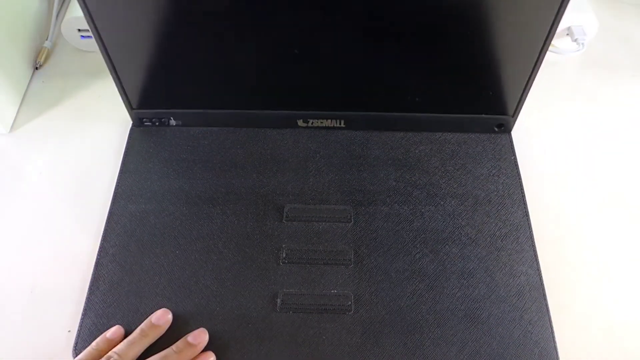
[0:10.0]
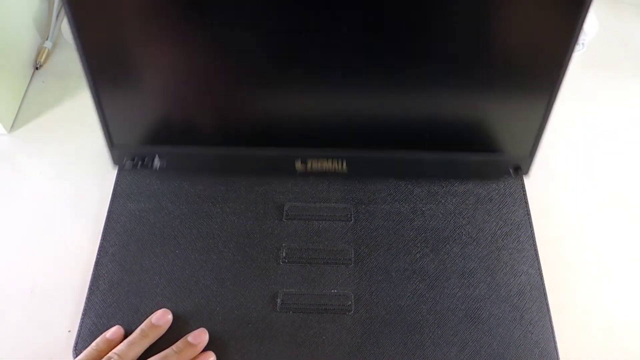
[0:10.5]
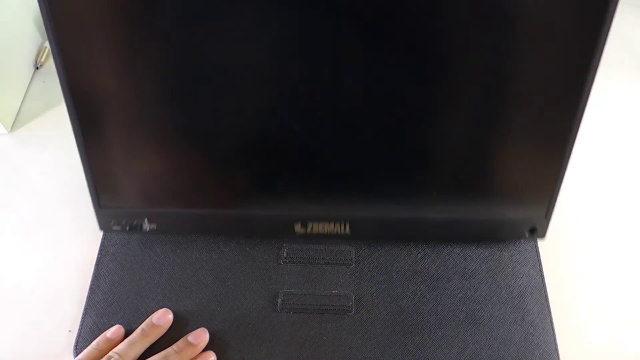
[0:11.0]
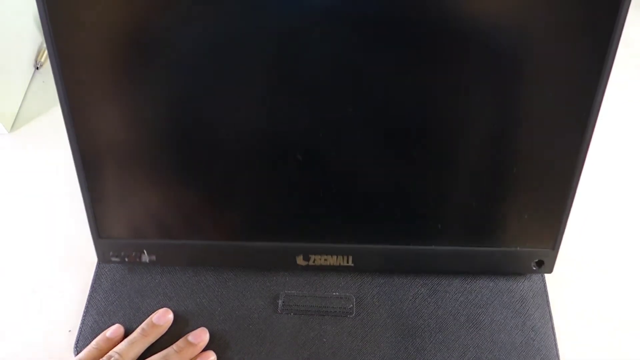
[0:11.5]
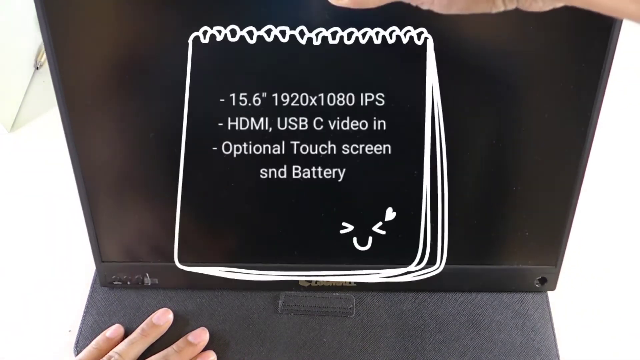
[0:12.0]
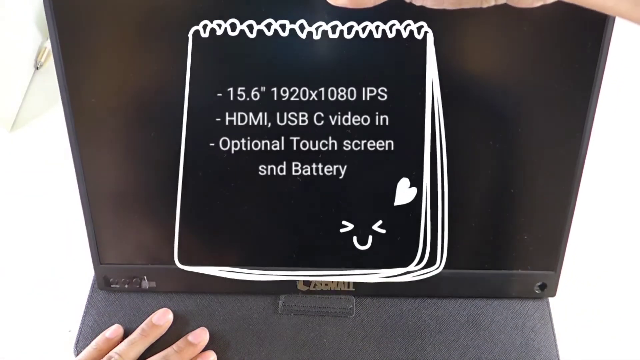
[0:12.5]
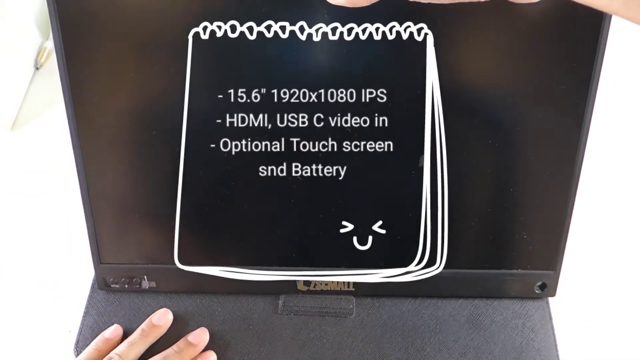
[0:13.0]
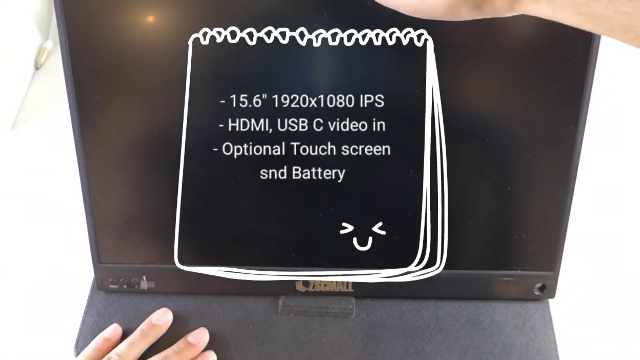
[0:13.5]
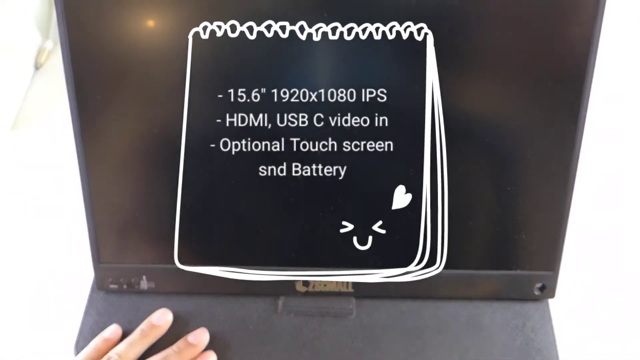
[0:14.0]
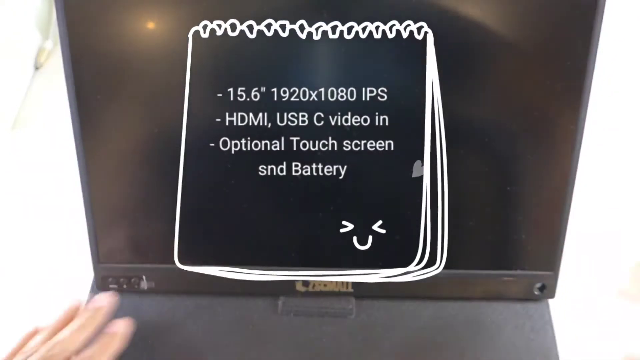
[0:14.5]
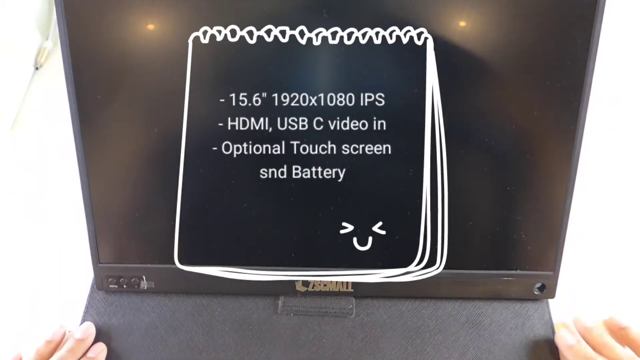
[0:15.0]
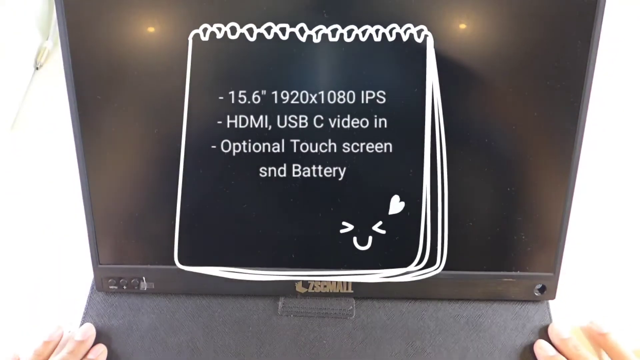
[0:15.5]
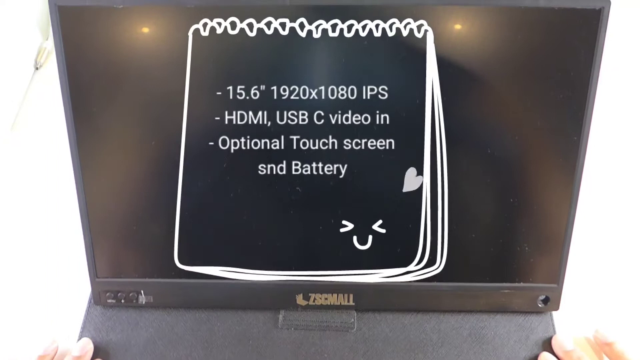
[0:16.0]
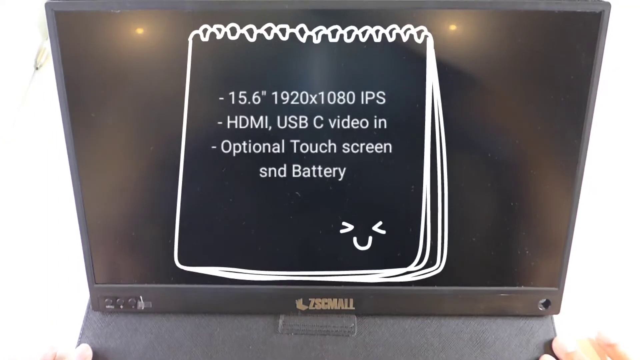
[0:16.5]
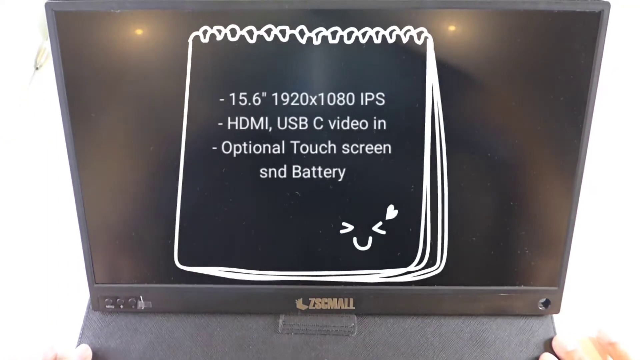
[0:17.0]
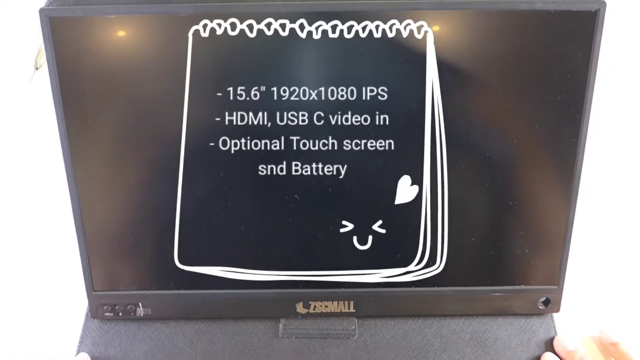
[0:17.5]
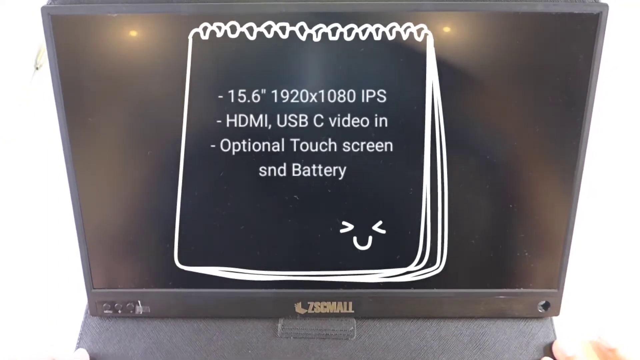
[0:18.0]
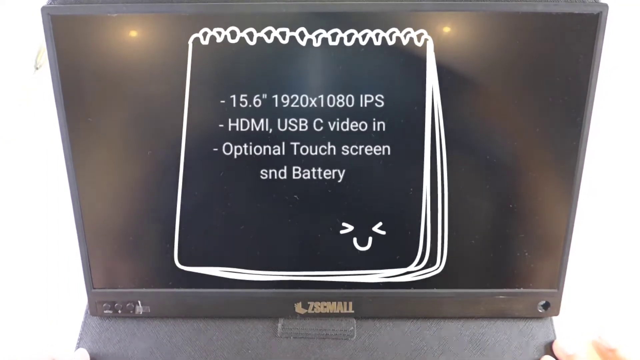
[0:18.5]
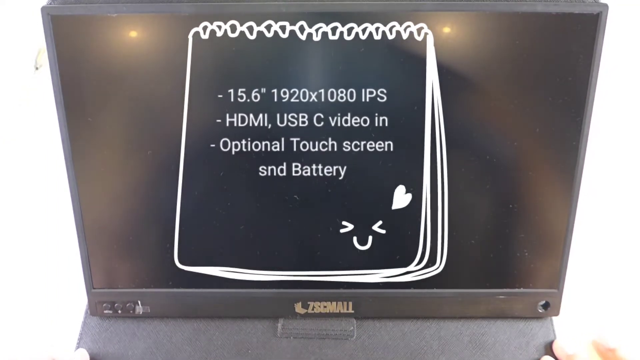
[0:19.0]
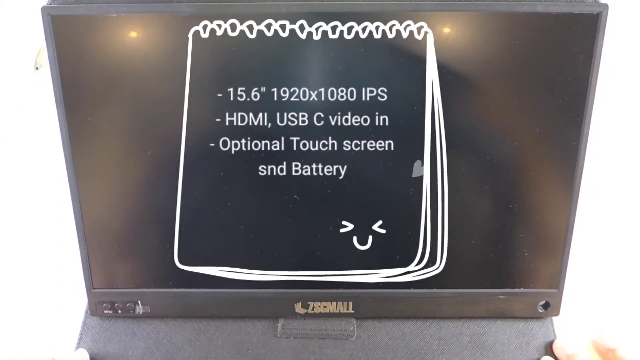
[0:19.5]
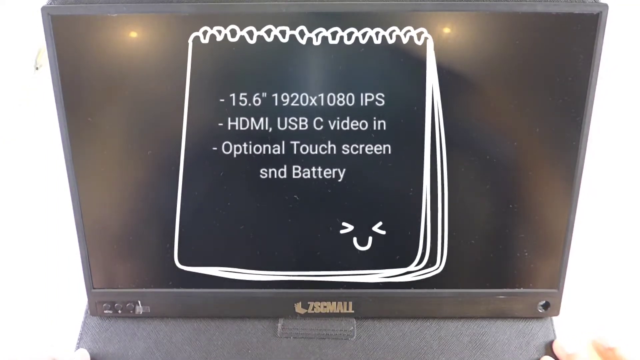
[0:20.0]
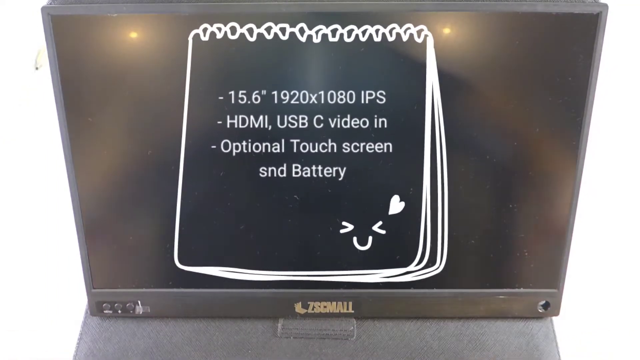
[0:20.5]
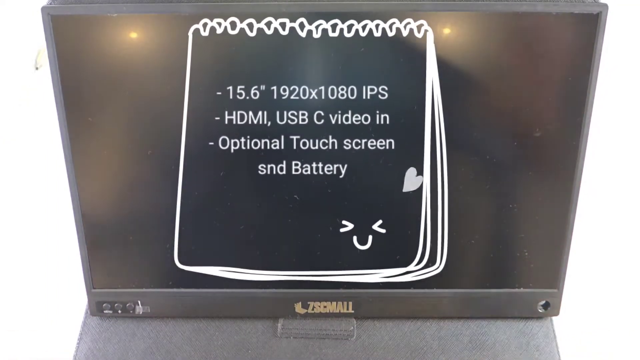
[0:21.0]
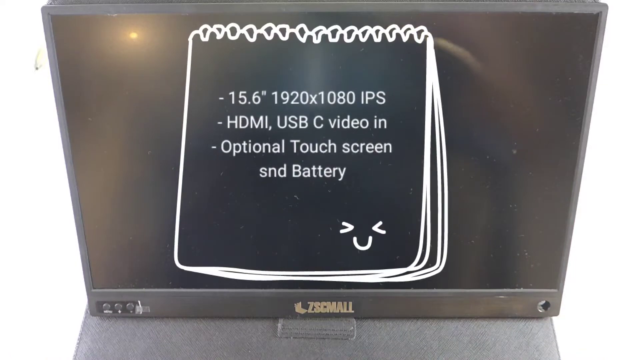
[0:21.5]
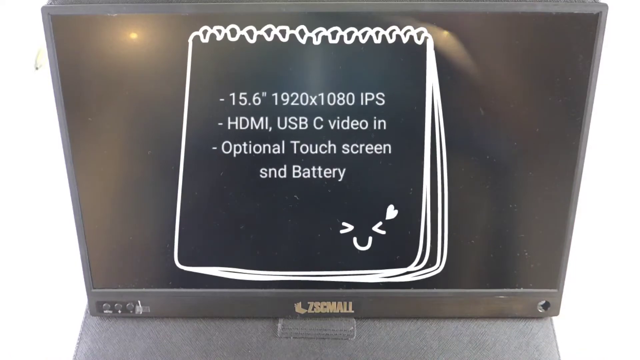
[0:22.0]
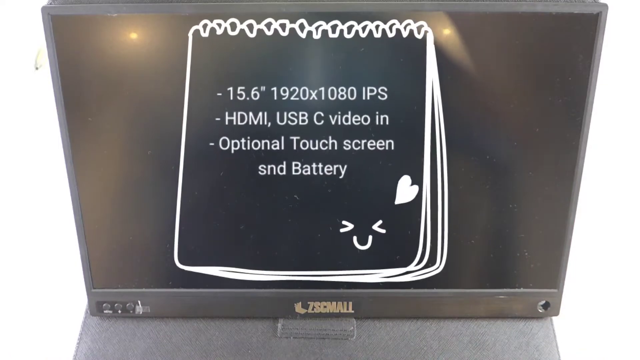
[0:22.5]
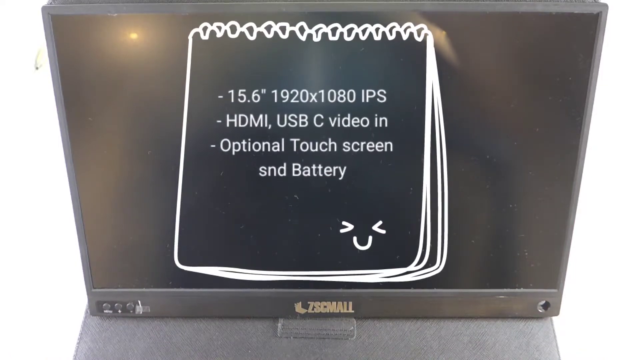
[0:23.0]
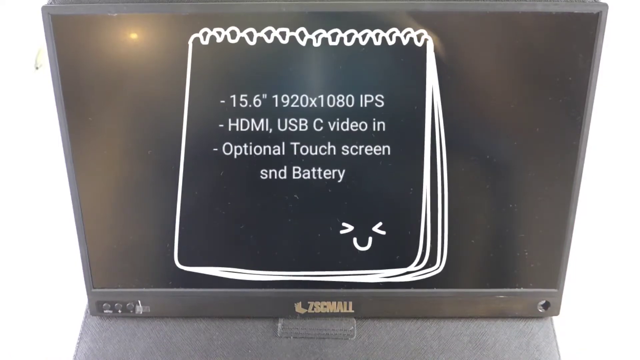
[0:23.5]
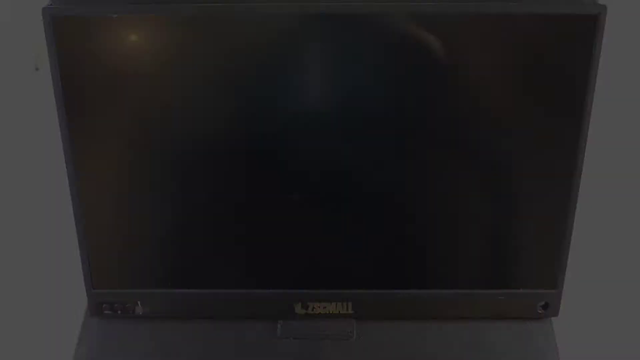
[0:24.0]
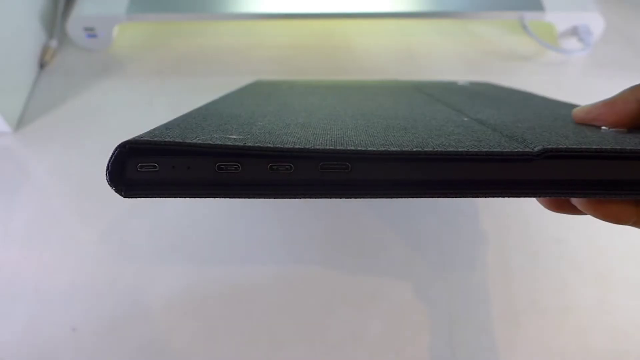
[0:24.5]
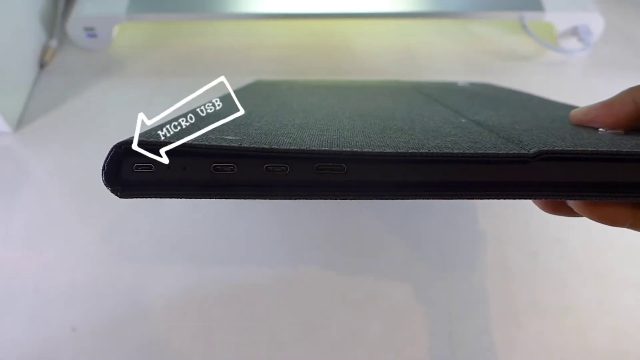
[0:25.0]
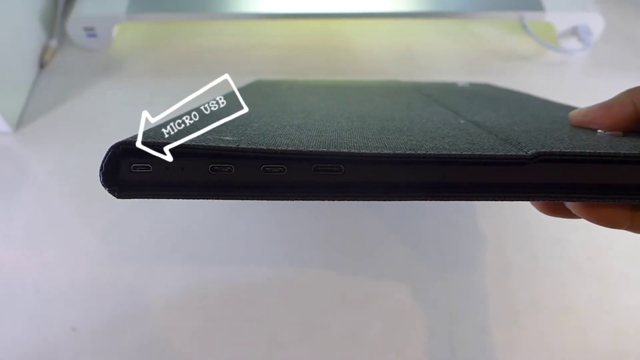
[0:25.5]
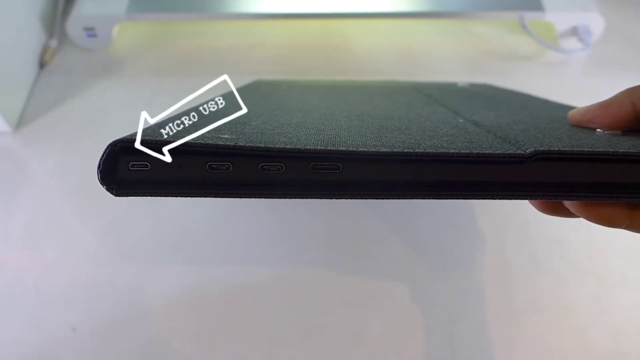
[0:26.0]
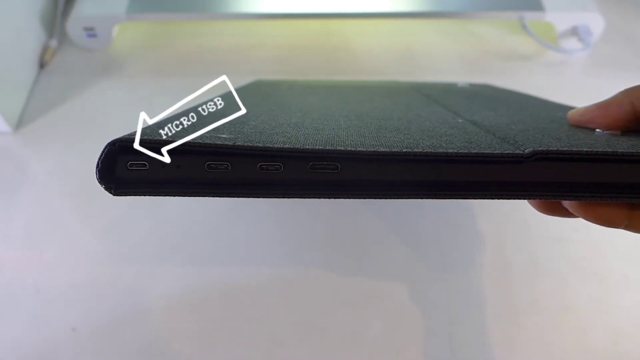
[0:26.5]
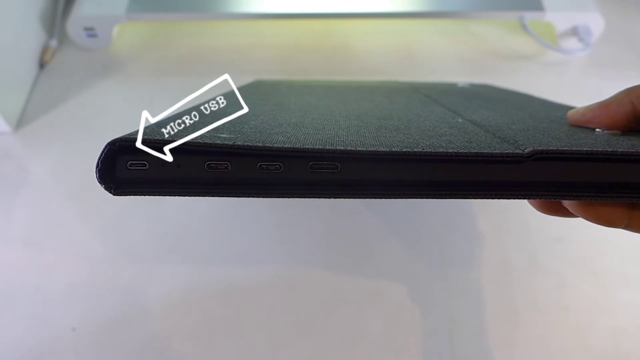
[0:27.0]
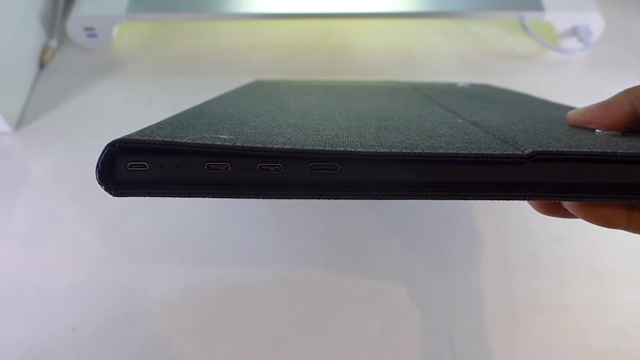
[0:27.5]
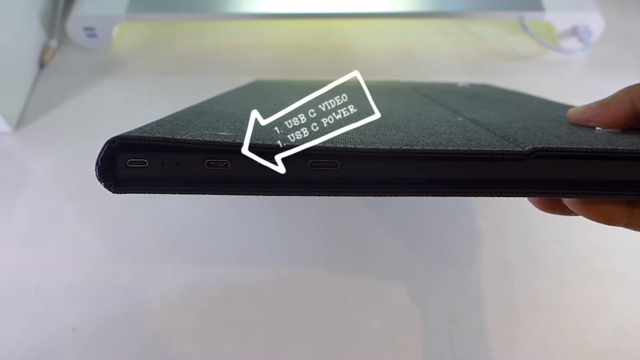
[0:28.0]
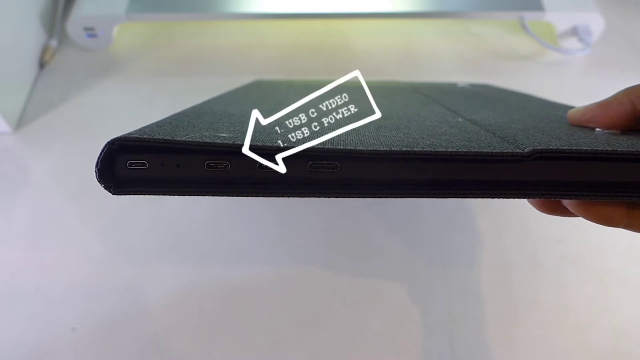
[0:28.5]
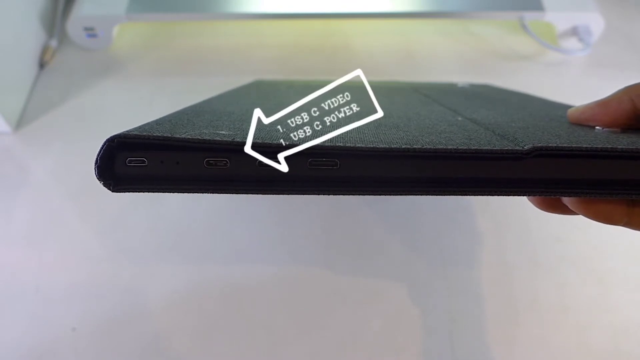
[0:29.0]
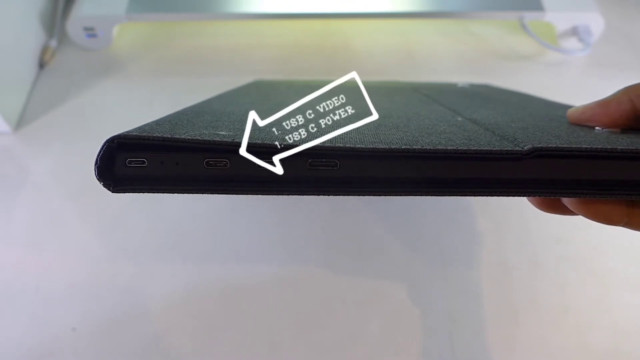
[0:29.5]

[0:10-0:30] A hand is in the lower left, just visible in the frame, and below it are a table and some sort of screen. It looks kind of like a laptop at first, but as it is moved along it looks like it might be a tablet or maybe just a monitor. The hand goes to the top to adjust it a little. An overlaid graphic of a notepad drawn in white outline appears, with four dashes for four stats: "15.6 inch", "HDMI USB-C video in" and "optional touchscreen and battery". A smiley face in the lower right has an animated heart coming up off it, and as the text moves up and down the notepad pulses. The video then cuts to a different take: a hand on the right-hand side holds what looks like a screen or tablet of sorts in something like a leather case, seen from the side, and the first port, a micro USB port, is pointed to.